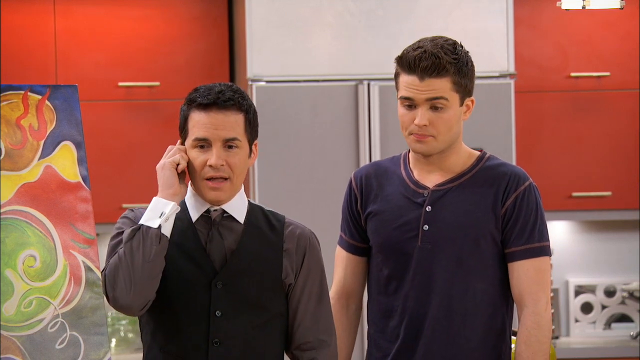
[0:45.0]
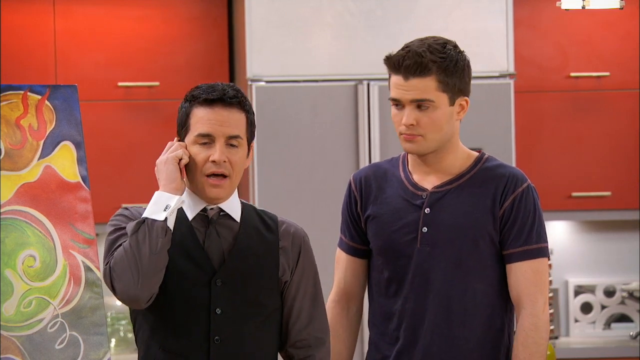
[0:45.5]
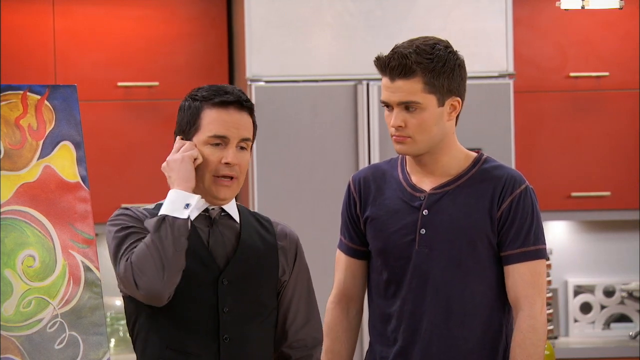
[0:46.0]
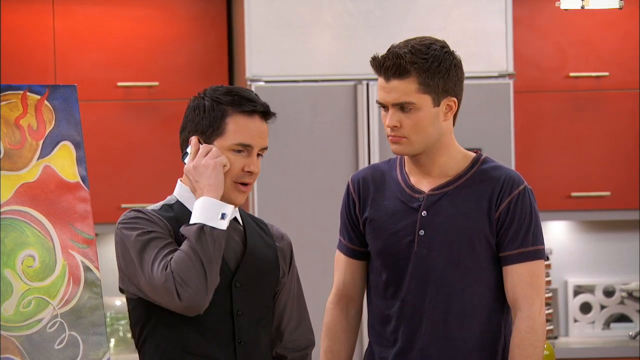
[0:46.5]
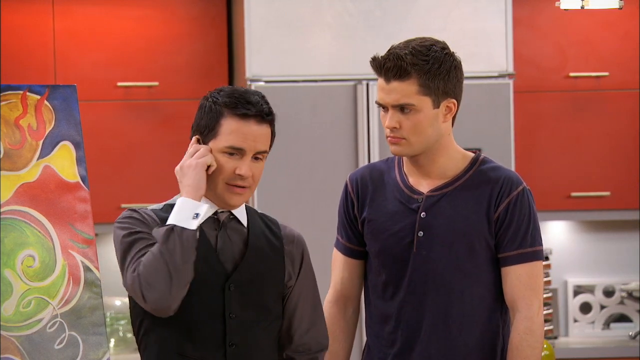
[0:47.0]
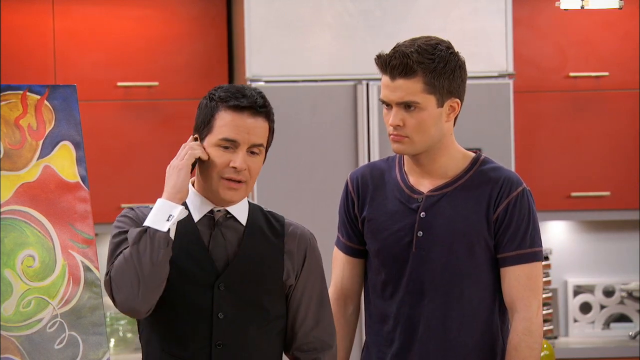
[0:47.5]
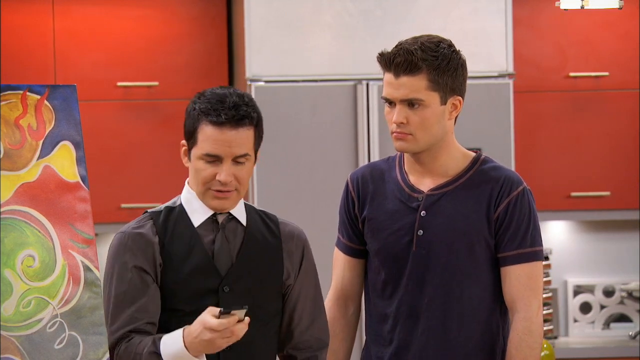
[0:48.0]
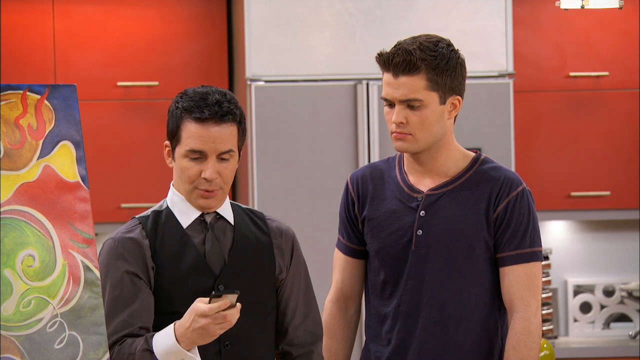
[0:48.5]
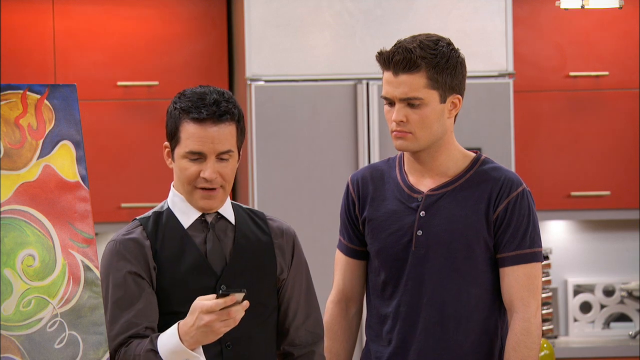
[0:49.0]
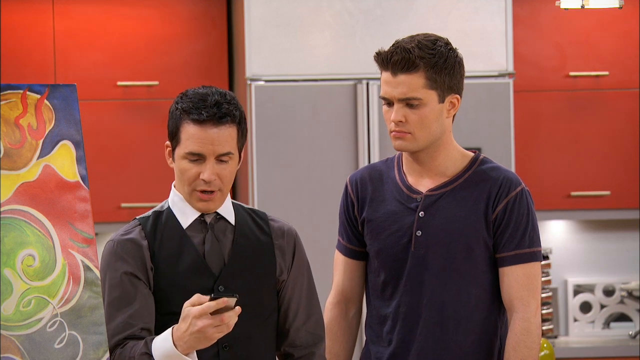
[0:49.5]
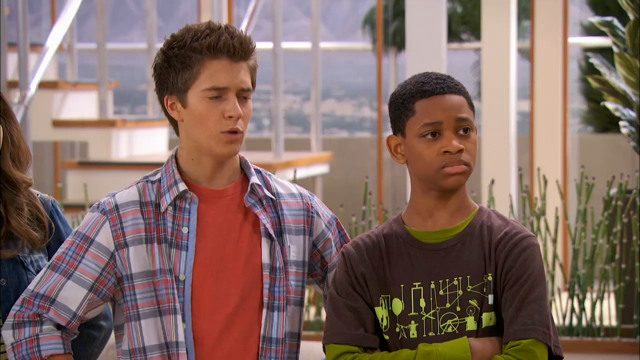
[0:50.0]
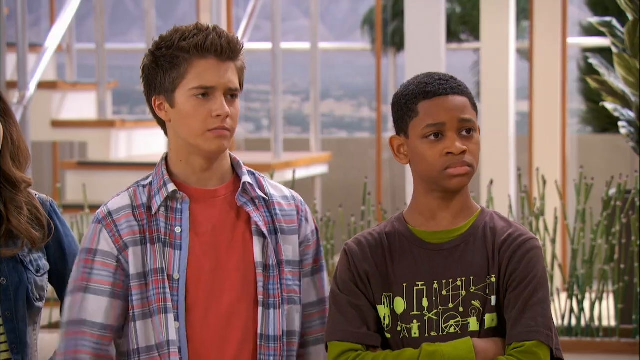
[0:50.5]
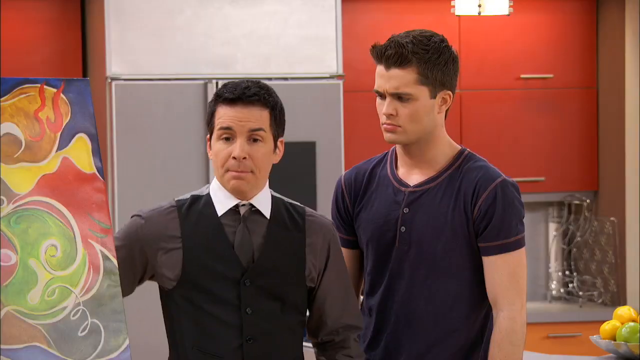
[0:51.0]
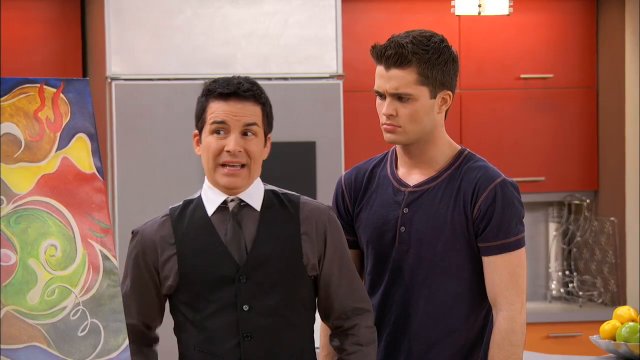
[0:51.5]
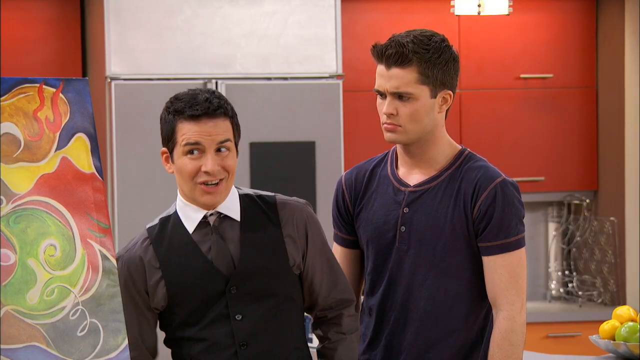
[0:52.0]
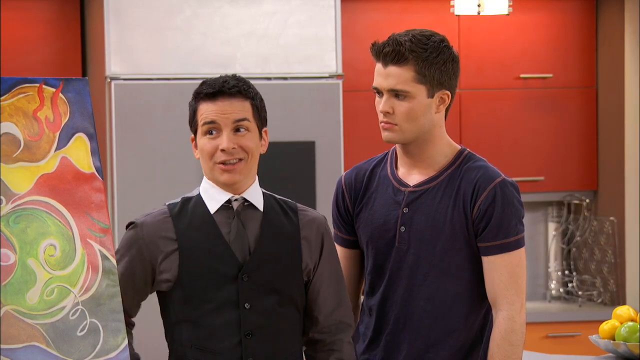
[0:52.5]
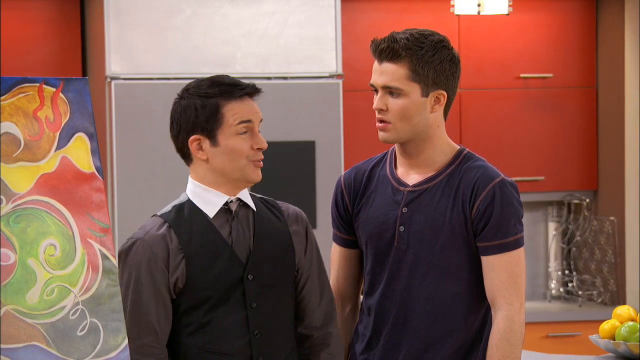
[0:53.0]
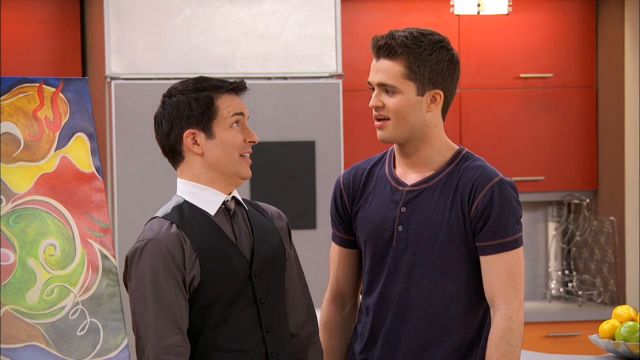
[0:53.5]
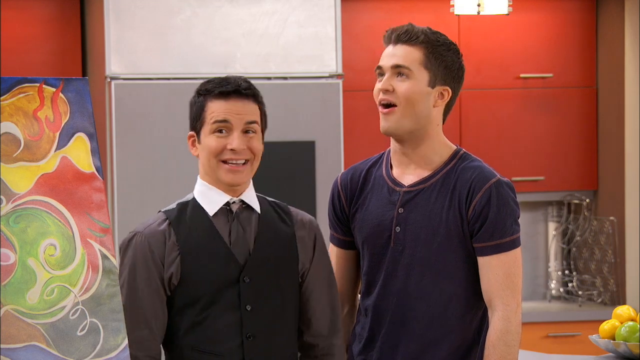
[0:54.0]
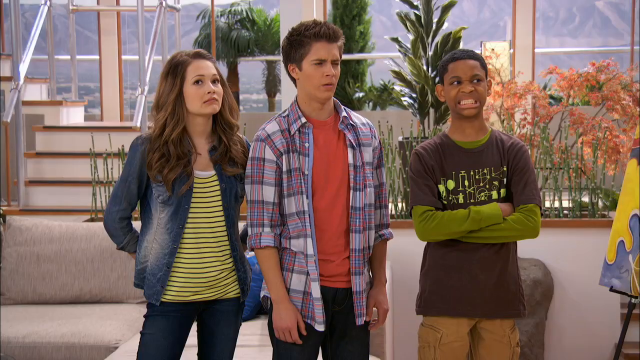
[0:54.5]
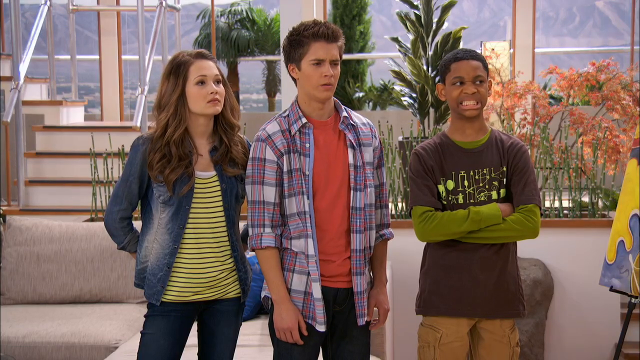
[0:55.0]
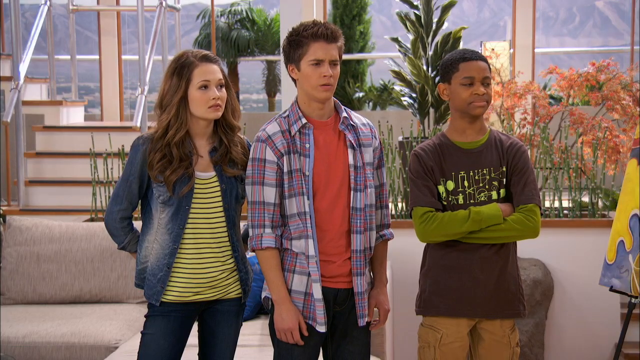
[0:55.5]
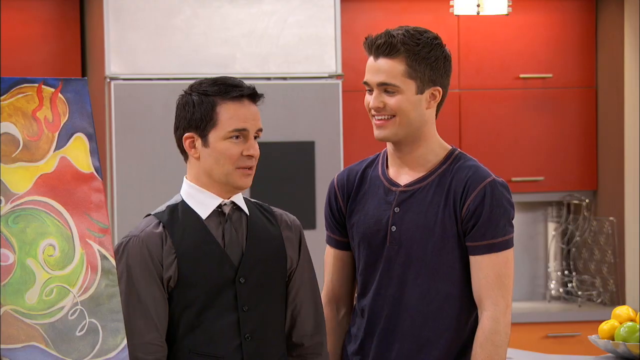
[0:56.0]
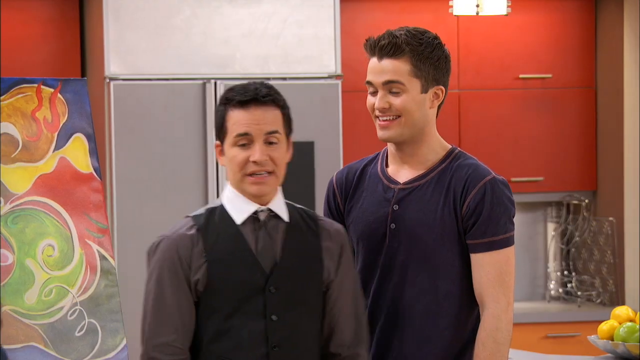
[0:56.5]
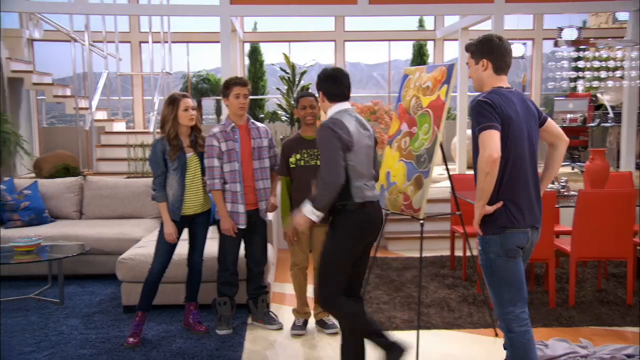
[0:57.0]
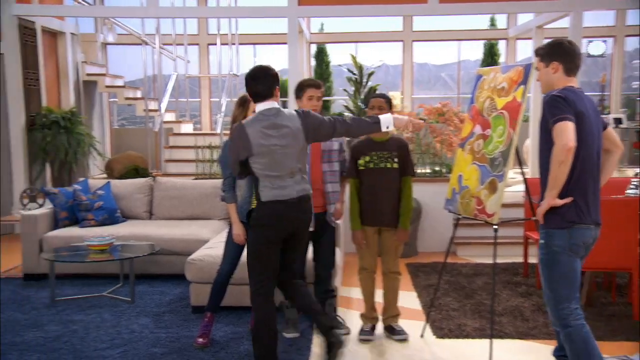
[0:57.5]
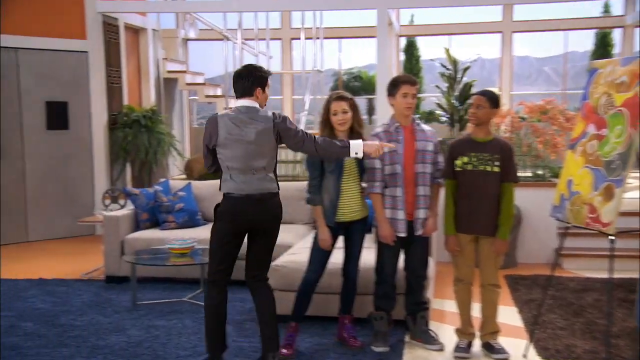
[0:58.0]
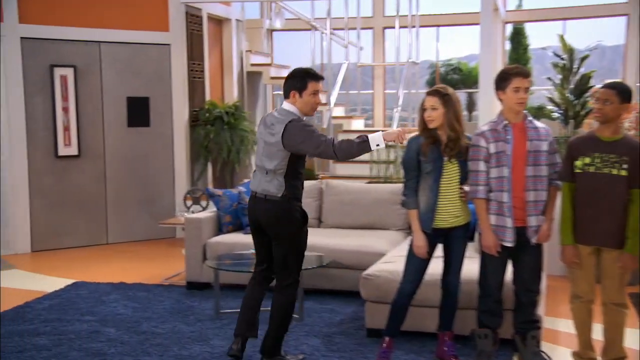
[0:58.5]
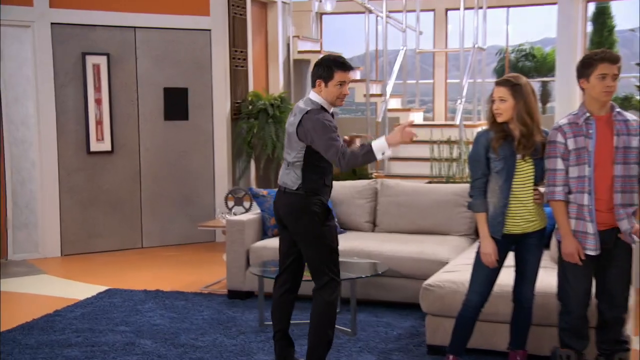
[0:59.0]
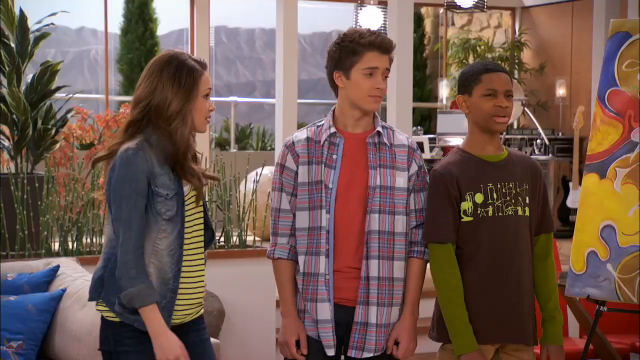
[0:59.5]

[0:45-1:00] The man speaks on the phone, holding it to his right ear, while the other four people stand in the background waiting. After only a moment or two he looks at the phone's screen again, presses it multiple times to hang up, and puts the phone back in his pocket. He turns to the young man at his side and starts to explain something, and as the kids ask a question he turns to address them as well. The camera pulls back out to show all five people and the painting in the center. In the background, fresh flowers and plants are along the edge of the room in front of the windows. The man takes a few steps out to the center of the room as everyone turns to look at him, then begins to walk out of the frame on the left. Next to him are a large gray sectional couch and a coffee table. Behind the young man in the navy t-shirt are the edges of what looks like a kitchen, with a rack for cutting boards, a large bowl of various citrus fruit such as lemons and limes on the table, a circular spice rack directly behind him, cabinets, and a refrigerator.